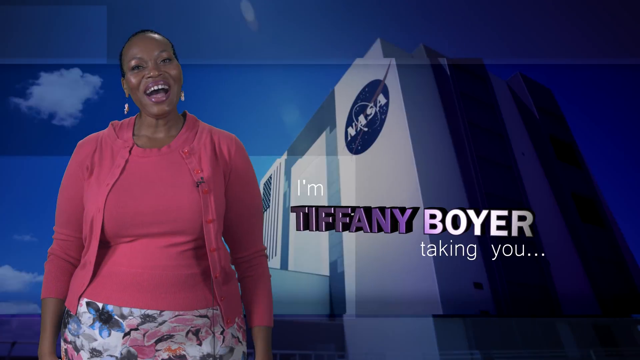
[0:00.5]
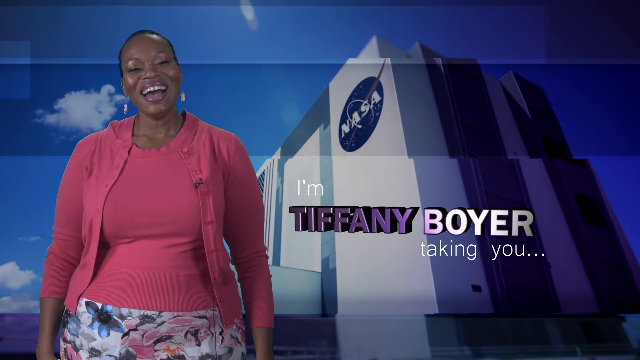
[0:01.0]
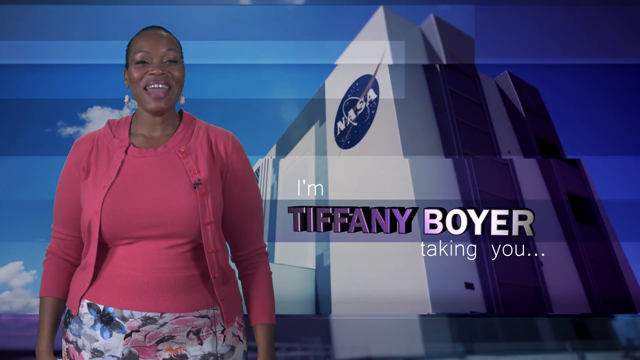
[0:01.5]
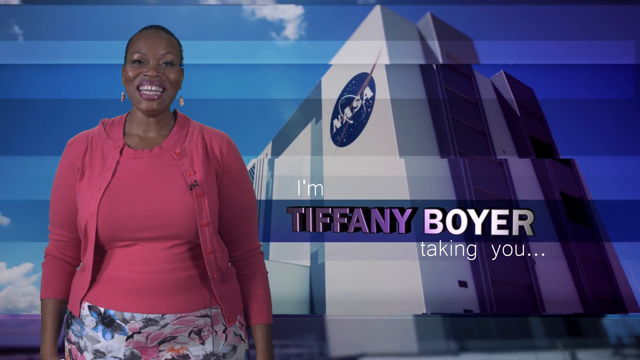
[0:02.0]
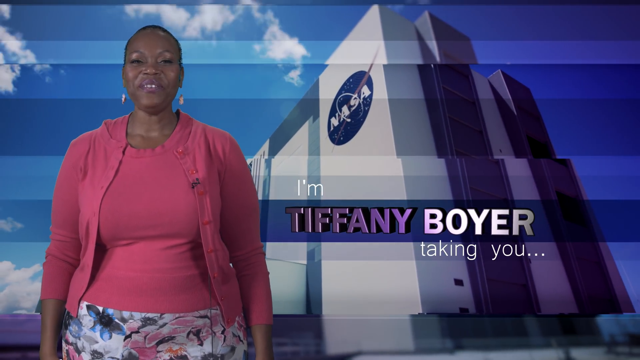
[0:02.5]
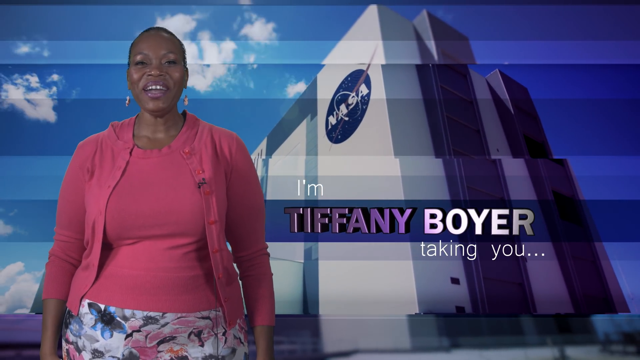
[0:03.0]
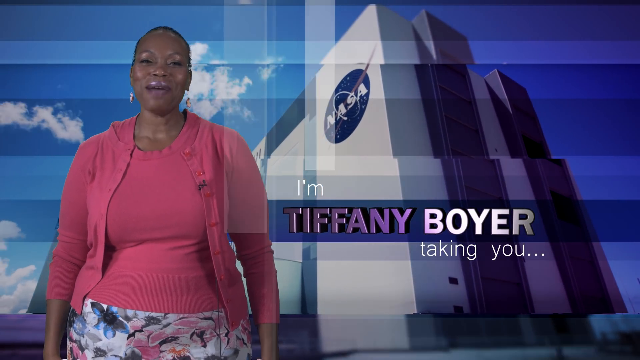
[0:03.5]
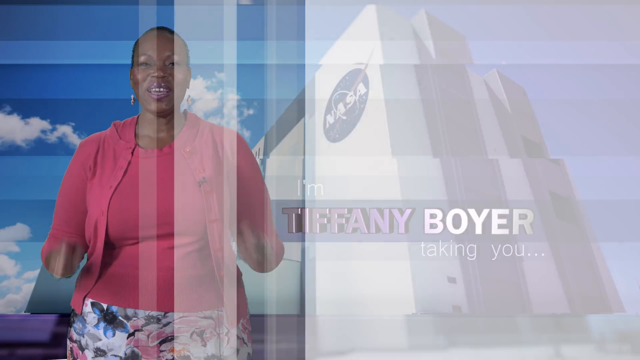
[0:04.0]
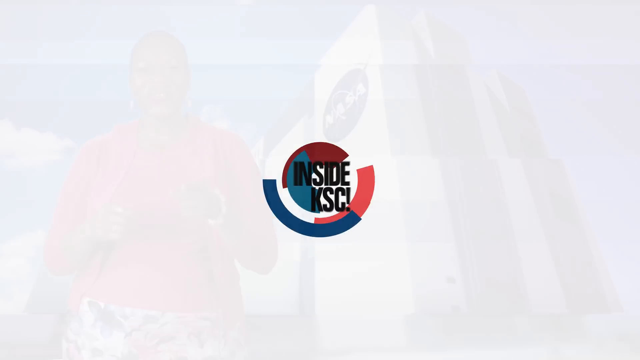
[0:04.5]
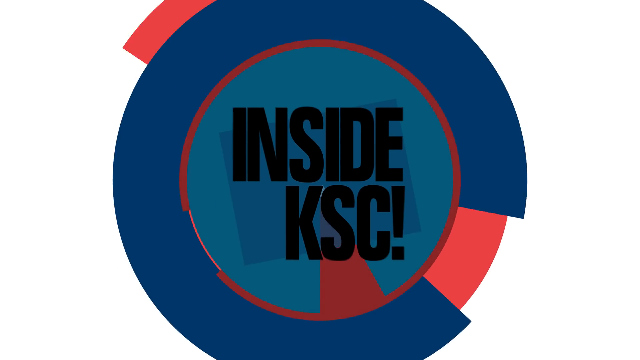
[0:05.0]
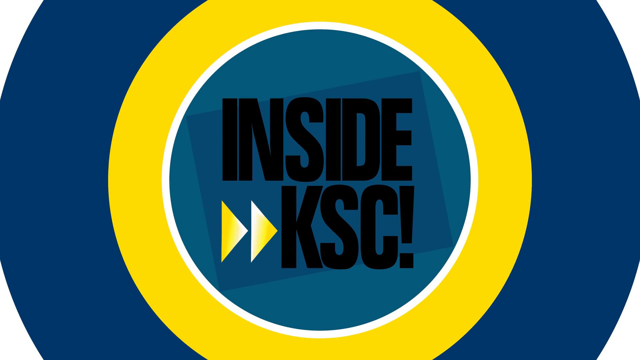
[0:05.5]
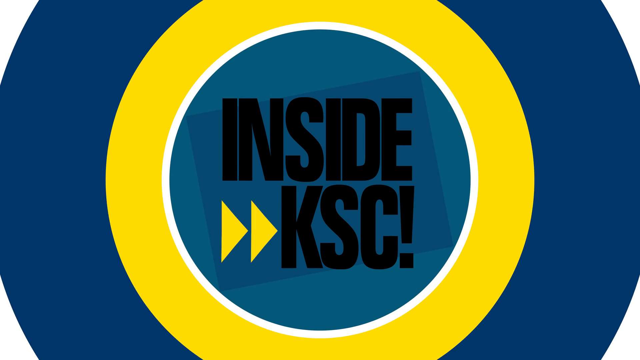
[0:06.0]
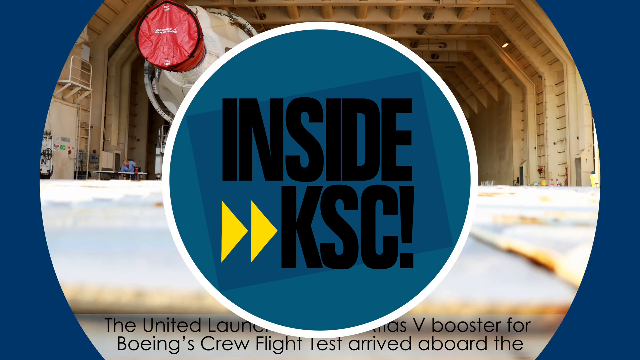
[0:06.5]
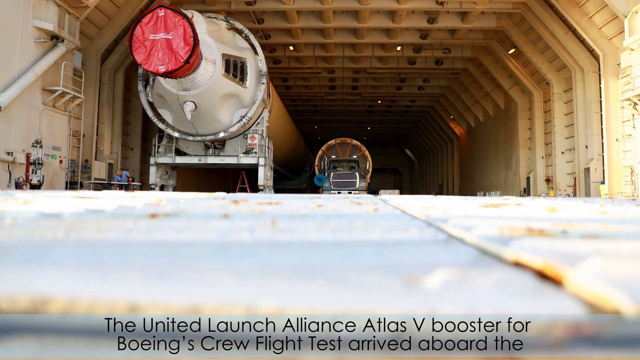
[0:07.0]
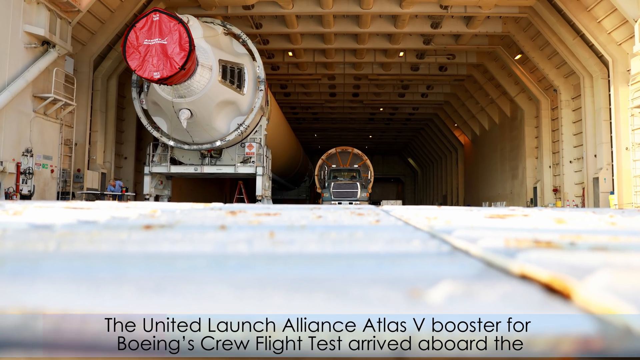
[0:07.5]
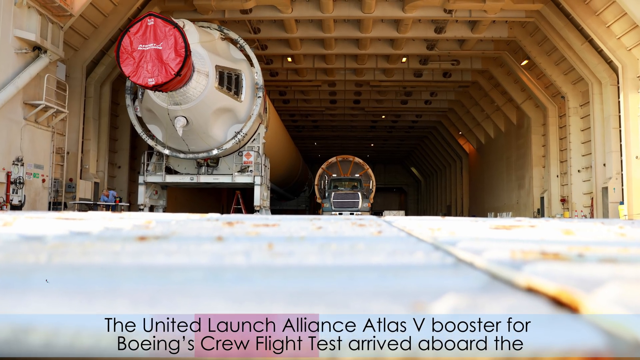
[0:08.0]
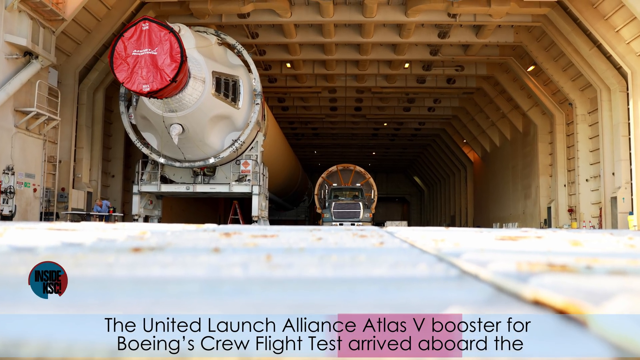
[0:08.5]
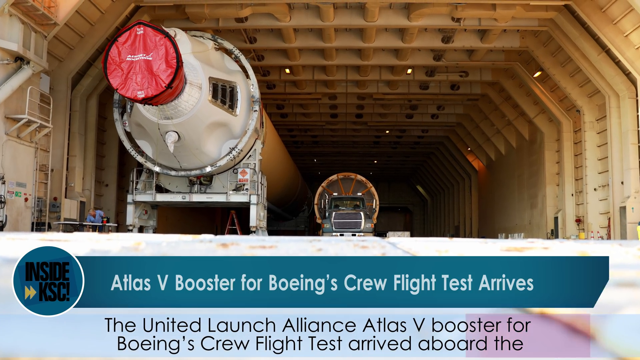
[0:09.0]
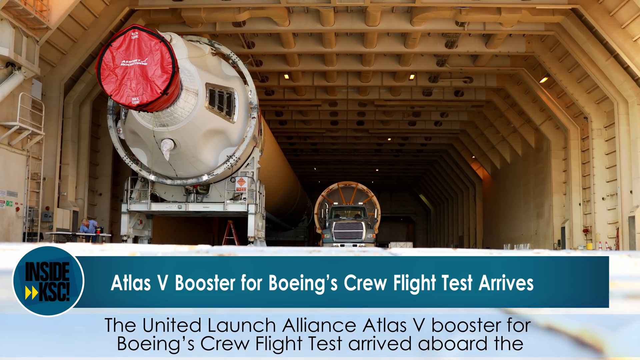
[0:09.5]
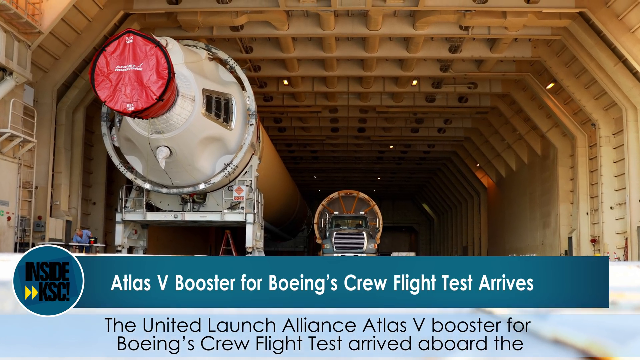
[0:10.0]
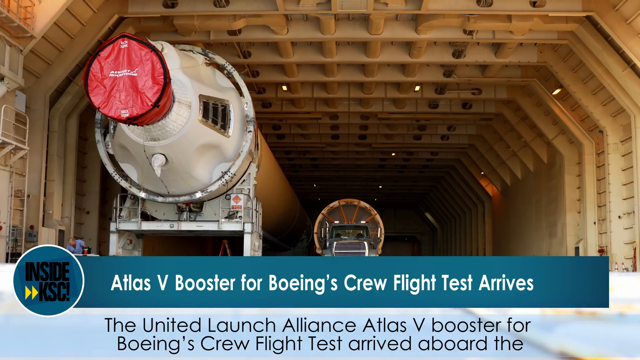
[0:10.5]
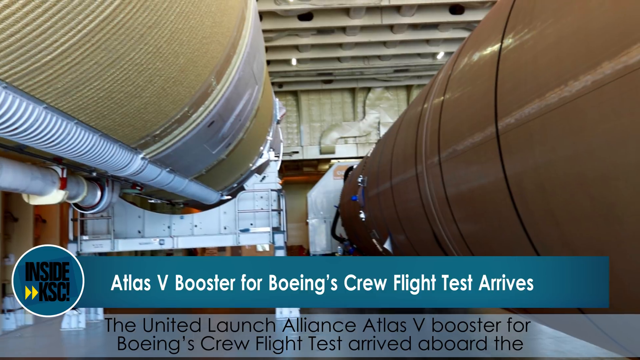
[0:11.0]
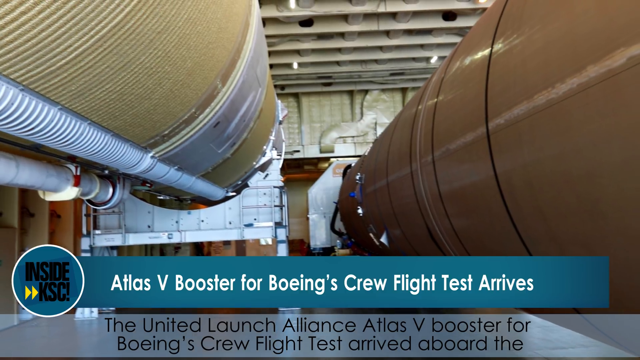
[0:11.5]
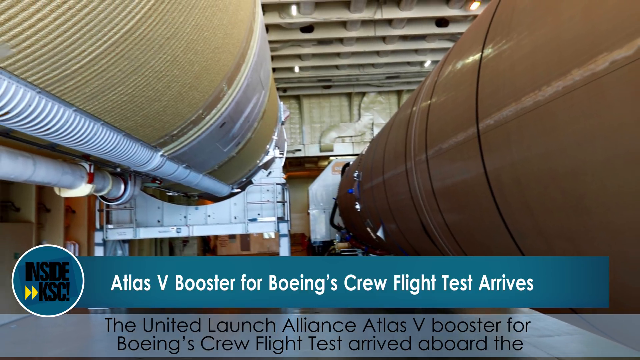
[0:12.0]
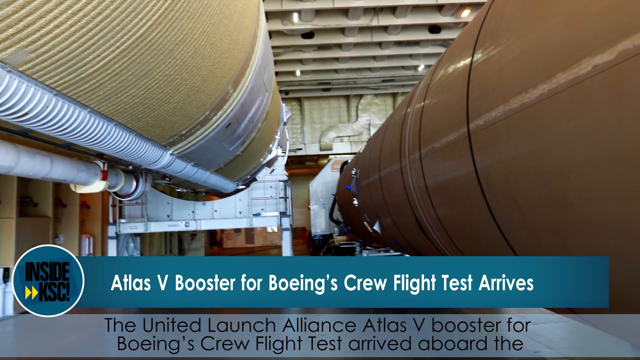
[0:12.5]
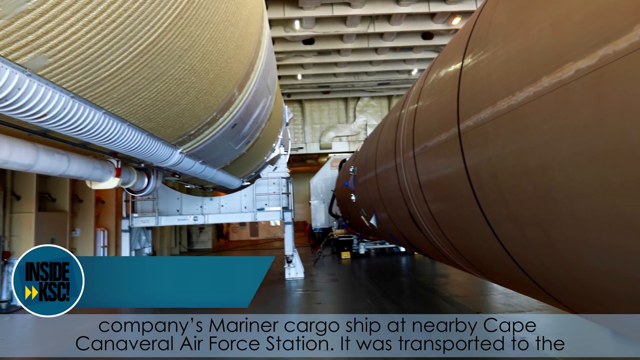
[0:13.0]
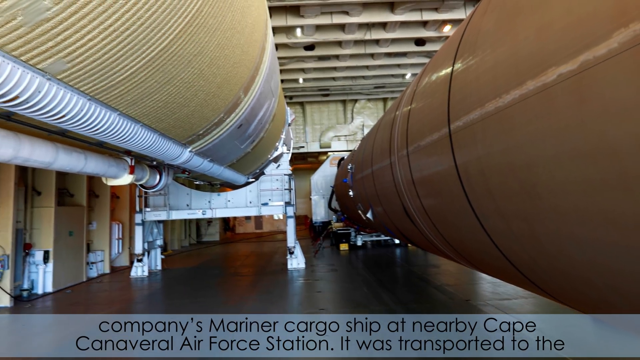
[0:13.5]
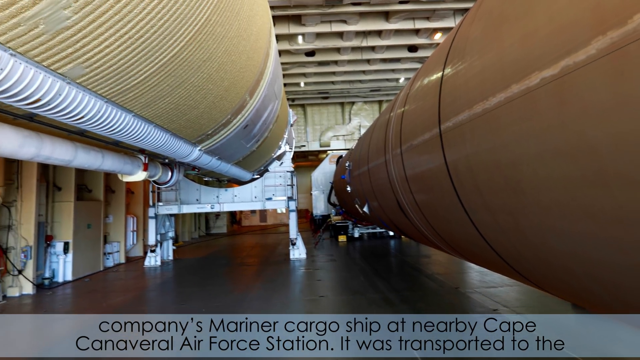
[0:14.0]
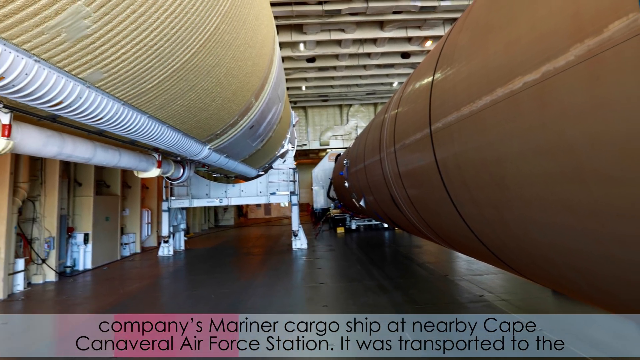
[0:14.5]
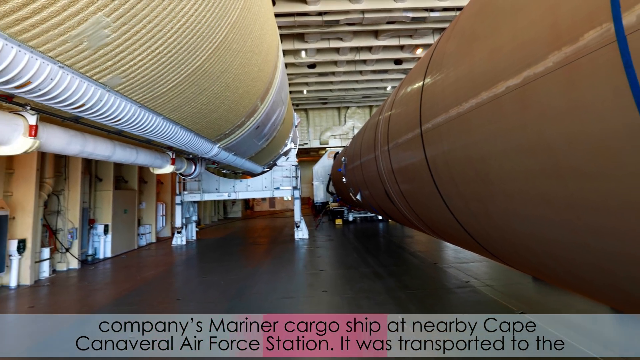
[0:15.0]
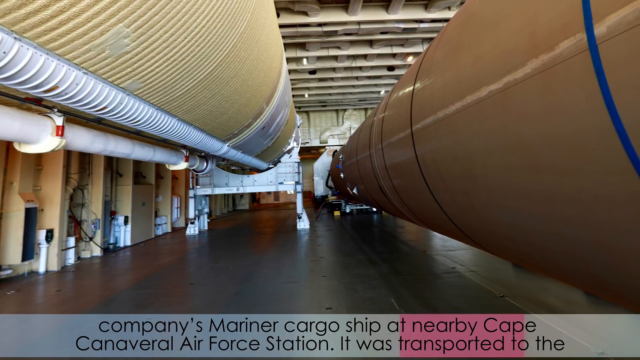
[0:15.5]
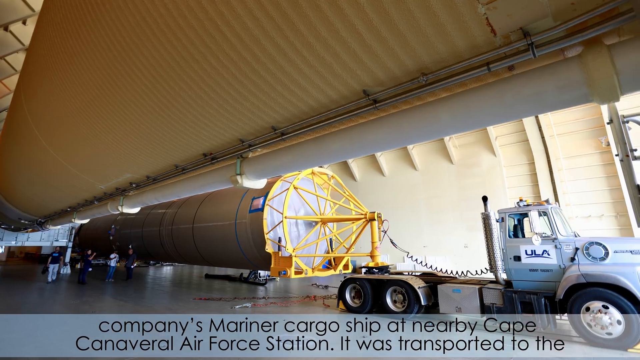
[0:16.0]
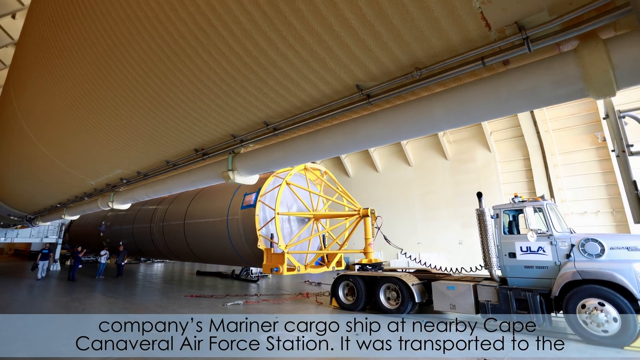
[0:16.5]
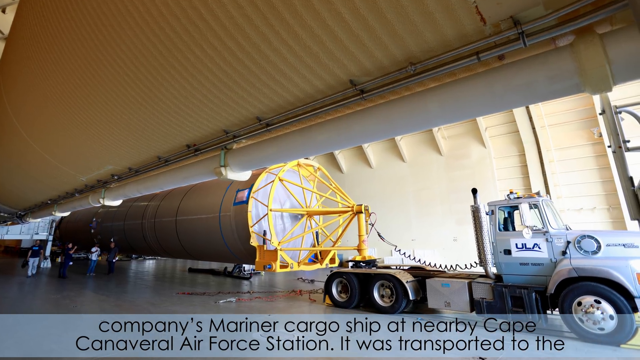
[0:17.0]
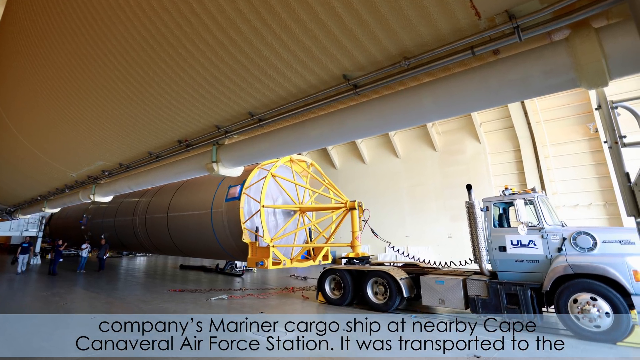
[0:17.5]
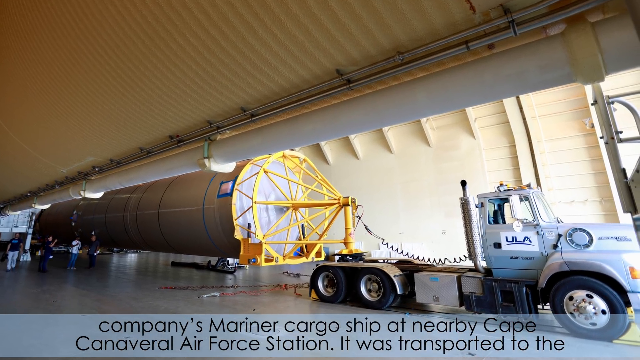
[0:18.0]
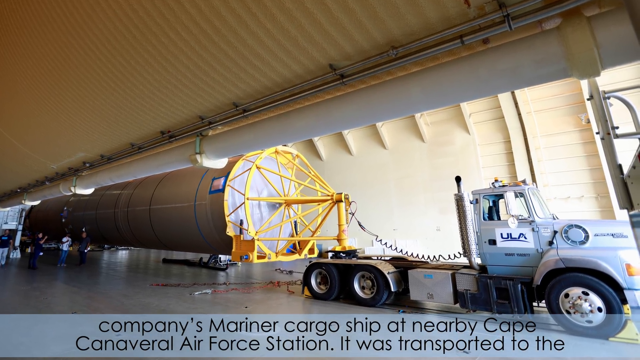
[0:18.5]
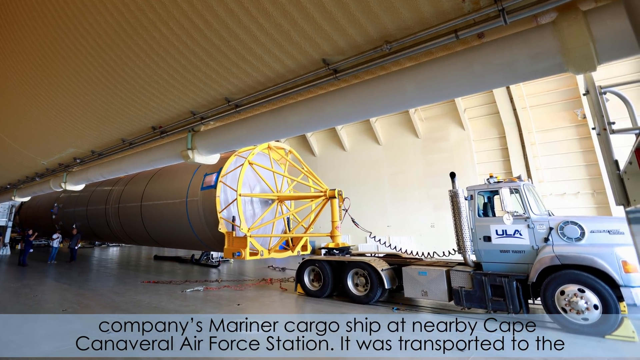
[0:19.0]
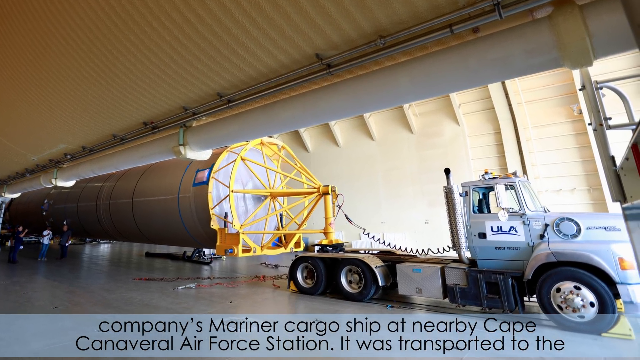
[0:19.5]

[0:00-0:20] A woman appears on the left half of the screen, seen from the waist up and talking to the viewer. She is an African-American woman with short hair and earrings, wearing a pink shirt with a pink cardigan sweater over it. She is kind of smiling as she talks and is probably in her 30s, maybe 40. On the right side of the image is a NASA building, whether a photograph or a digital image is unclear; it looks like a two- or three-story white building with a NASA logo on the front. Behind it is blue sky with clouds, apparently digitally created. The video cuts to an entirely digitally created screen with motion: it goes from white to a bullseye shape made, from the outside in, of blue, yellow and light blue rings, with "Inside KSC!" in black in the middle, and the bullseye grows larger. Next comes a photograph of what looks like some kind of warehouse storage holding sections of a rocket ship, long tubes whose scale is hard to judge; a really small person is visible in the lower left, showing how huge they are, and the view zooms in on them. A graphic below shows the Inside KSC! logo with the text "Atlas V booster for Boeing's crew flight test arrives" next to it. Another image shows them from a different angle: two of the long tubes, the booster rockets, both inside some kind of huge warehouse, with the camera pulling away and never sitting still. Yet another picture shows the front cab of a truck pulling one of the long booster rockets behind it.